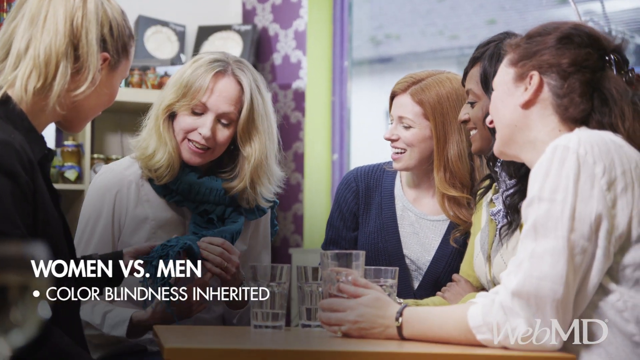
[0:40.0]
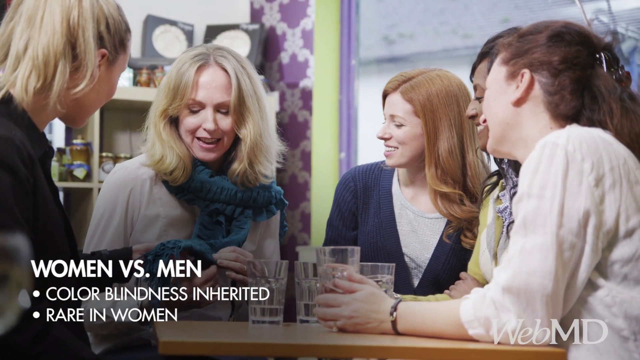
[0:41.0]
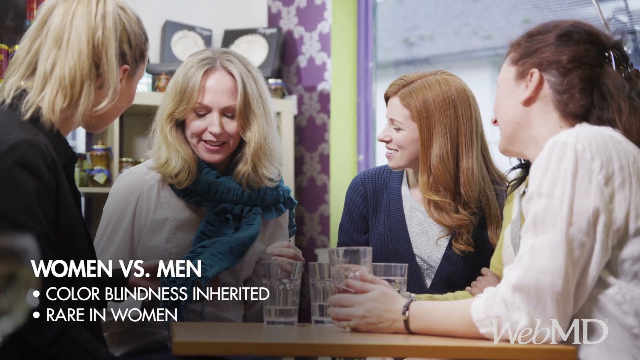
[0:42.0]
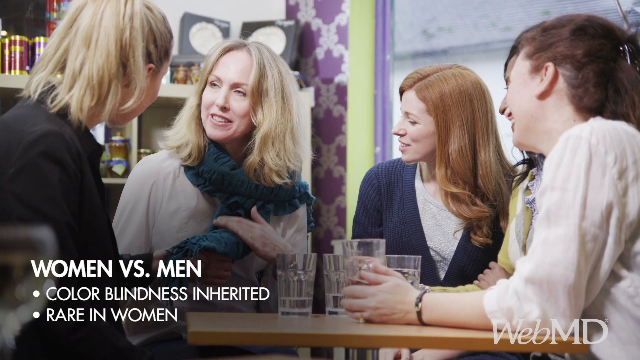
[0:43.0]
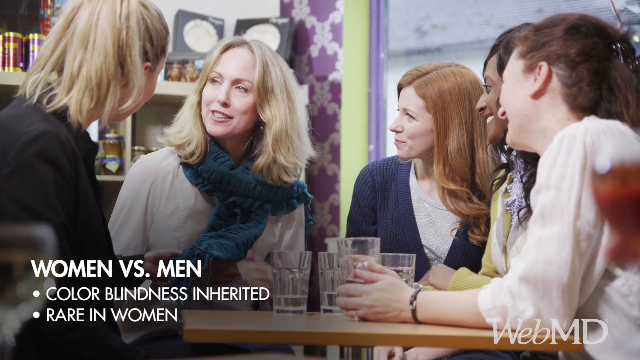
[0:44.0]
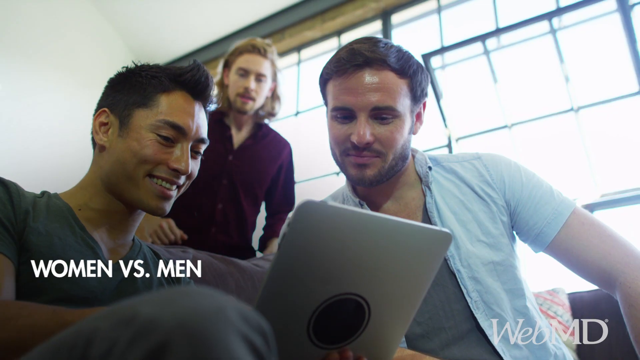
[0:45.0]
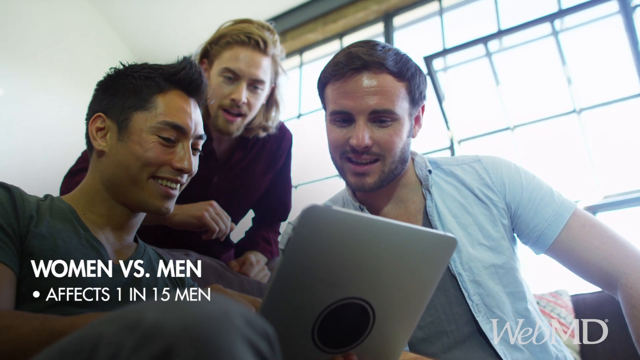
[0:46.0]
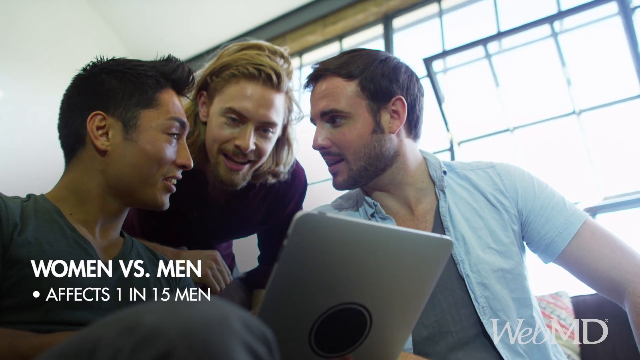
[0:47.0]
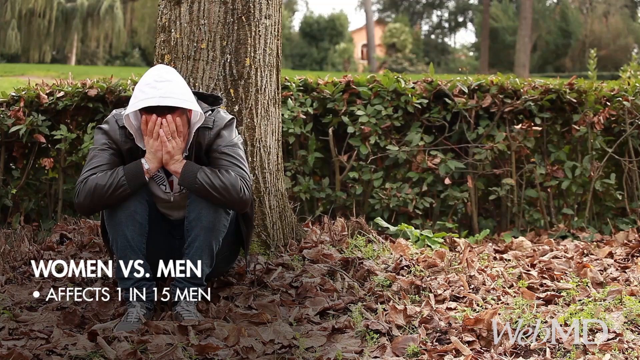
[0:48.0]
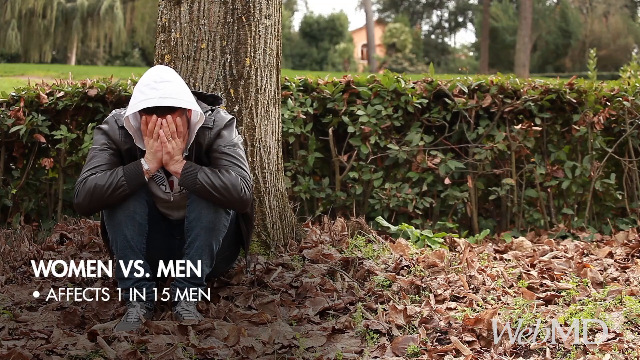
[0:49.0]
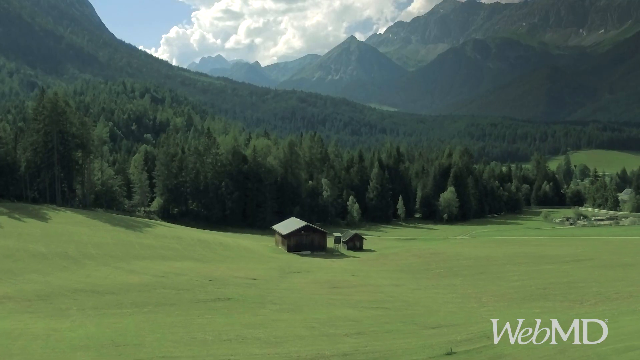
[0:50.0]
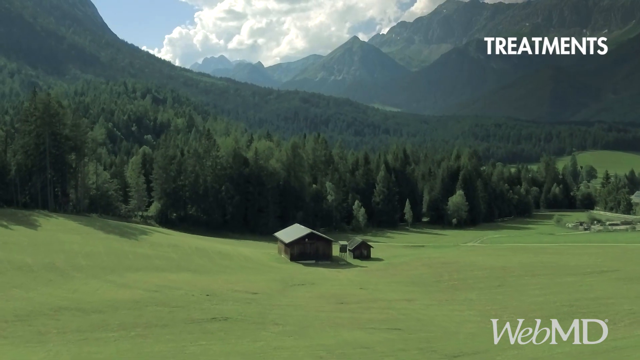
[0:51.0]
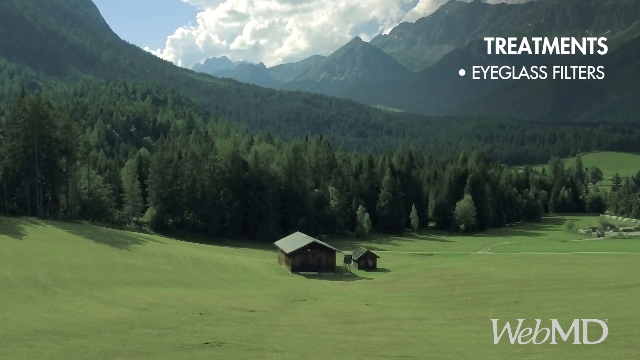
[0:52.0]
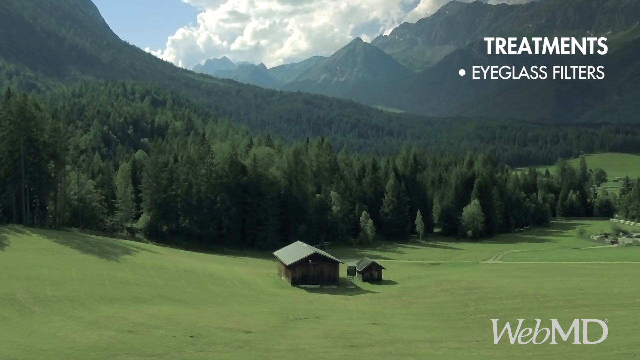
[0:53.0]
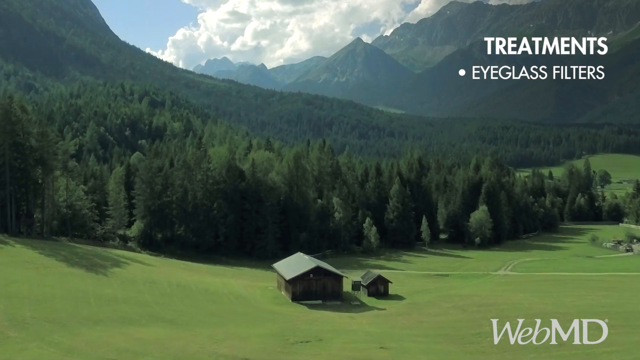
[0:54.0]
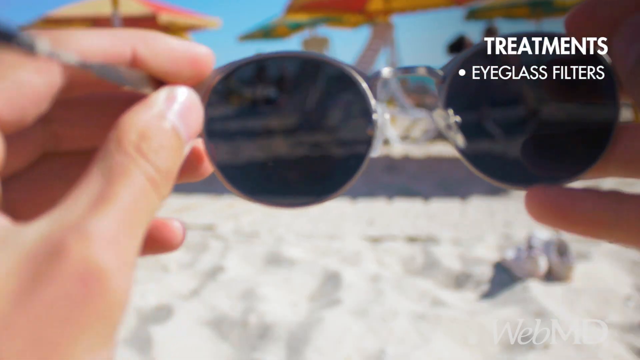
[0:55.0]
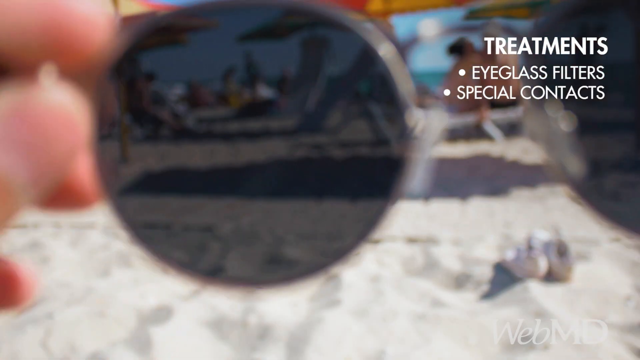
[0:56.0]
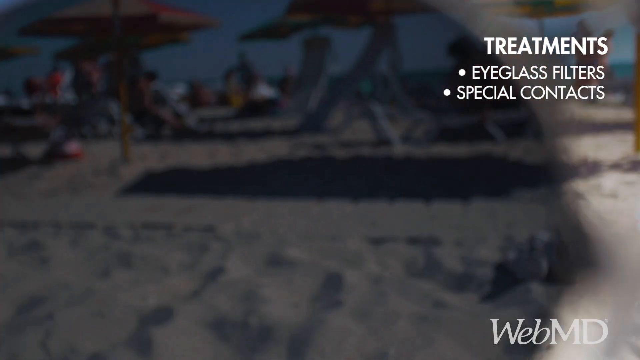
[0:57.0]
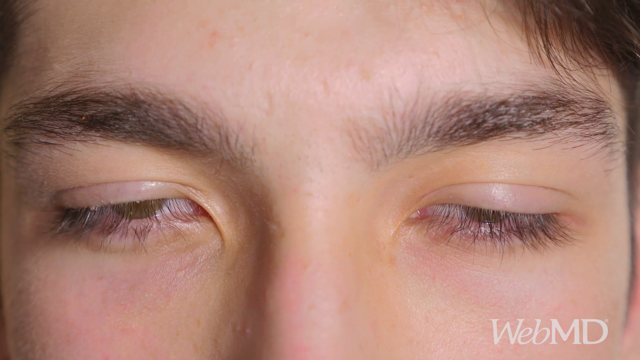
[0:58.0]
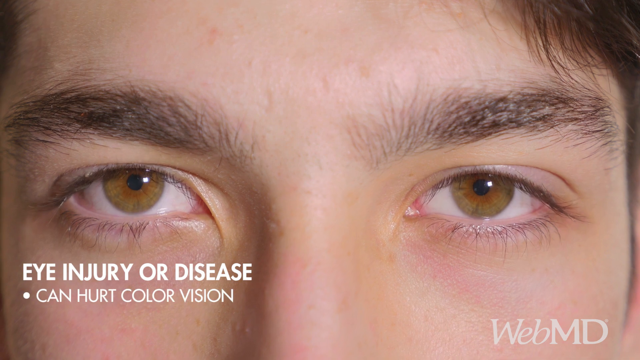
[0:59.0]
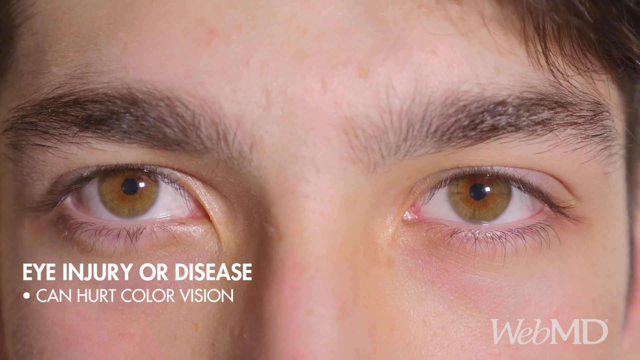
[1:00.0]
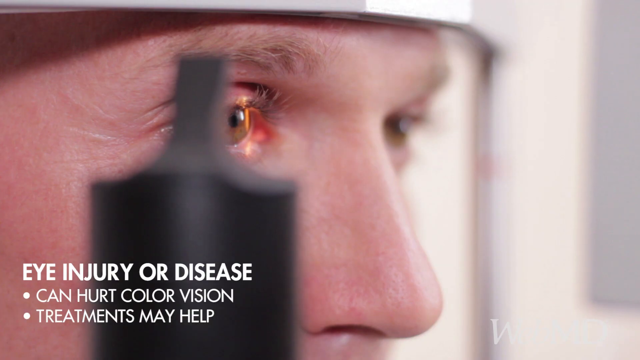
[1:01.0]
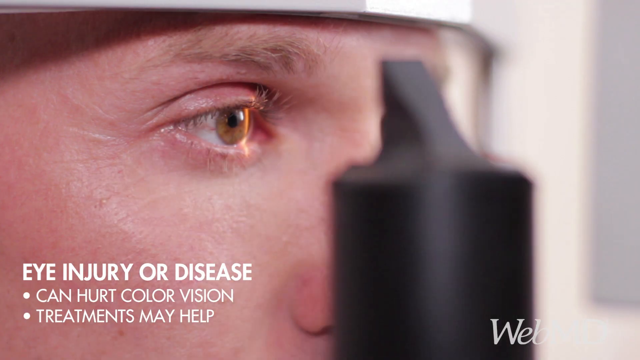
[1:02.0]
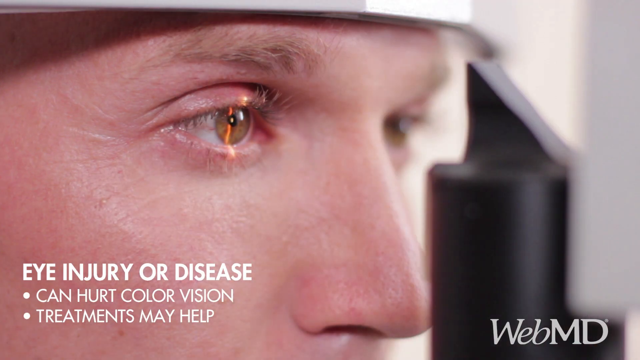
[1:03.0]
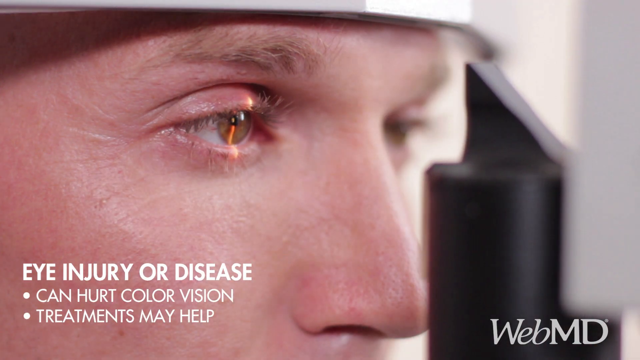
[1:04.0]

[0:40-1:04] Several women are sitting around a table. In the bottom left, bold capital text reads "women versus men," with two bullet points underneath in non-bold, white, all-capital font: "colourblindness inherited" and "rare in women." The women are of various ages: the two furthest to the left are blonde and Caucasian, and to the right are two red-haired Caucasian women and a black woman with black hair. They wear a mix of cardigans, scarves and similar items and are having a casual conversation. There are glasses on the table that appear to be filled with water, and they seem to be in some kind of cafe. The video cuts to three men looking at a tablet, one of them showing the others something; one is Asian and two are Caucasian. Text in the bottom left reads "colourblindness affects one in 15 men." A man wearing a jacket and hoodie is sat by a tree stump with his head in his hands. Another aerial drone shot follows, over a large, all-green forest with mountains in the background. In the top right, treatments for colourblindness appear, including "eyeglass filters" and "special contacts," over more shots of eyes, glasses and similar things. Text in the bottom left reads "eye injury or disease can hurt colour vision" and "treatments may help" as medical procedures involving the eyes are shown.